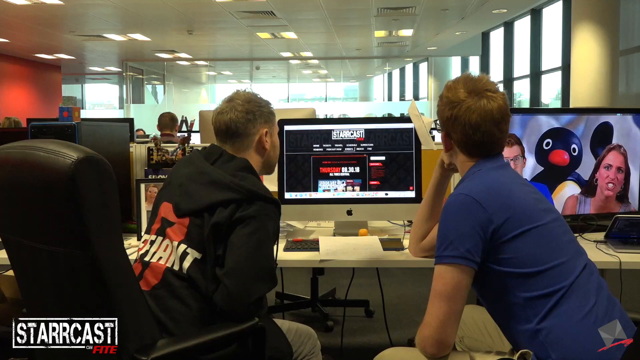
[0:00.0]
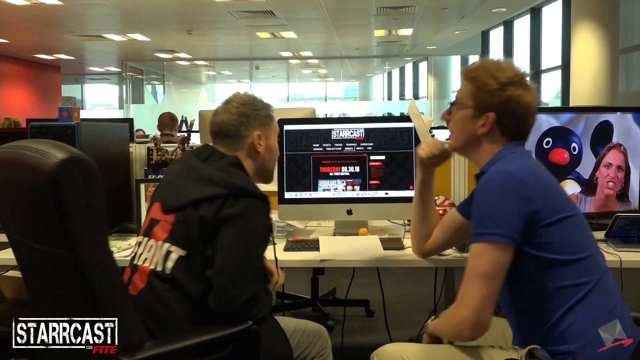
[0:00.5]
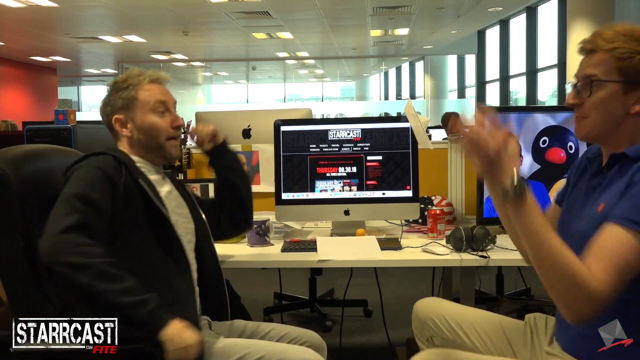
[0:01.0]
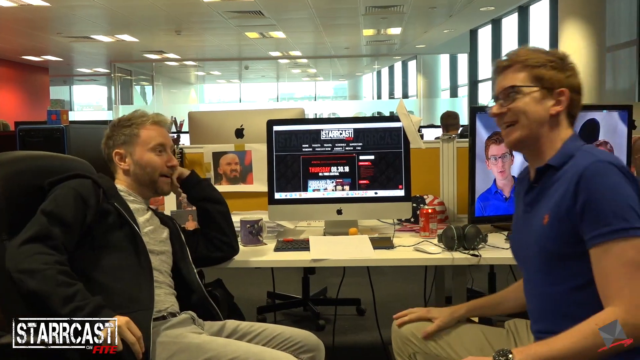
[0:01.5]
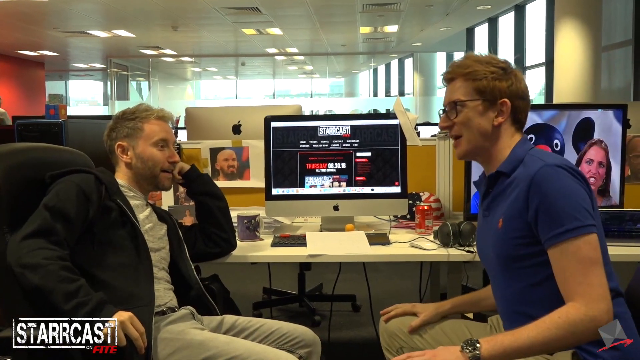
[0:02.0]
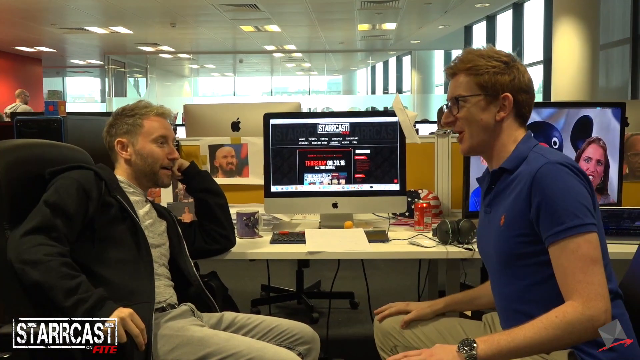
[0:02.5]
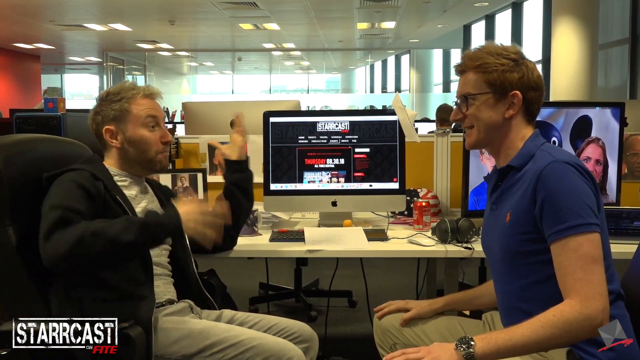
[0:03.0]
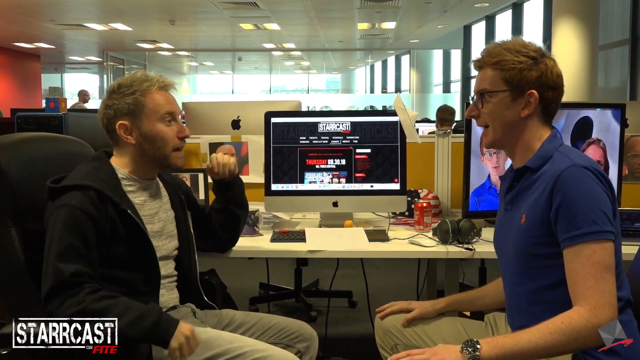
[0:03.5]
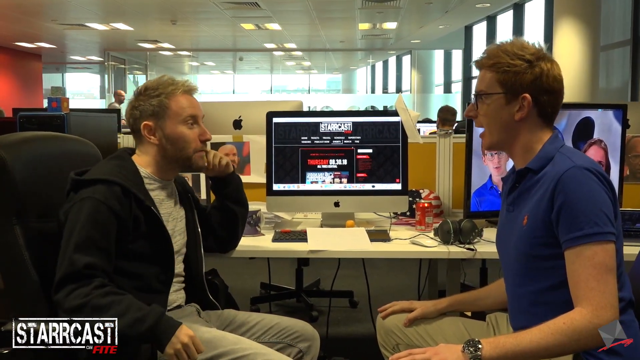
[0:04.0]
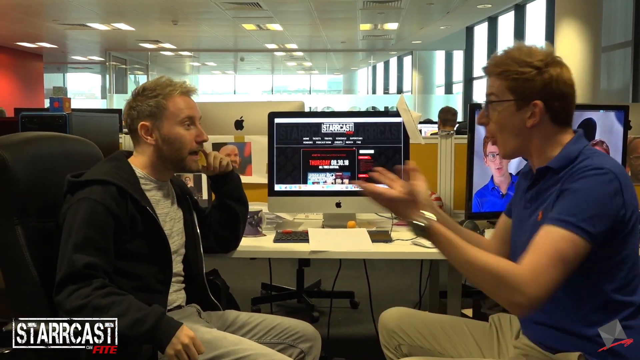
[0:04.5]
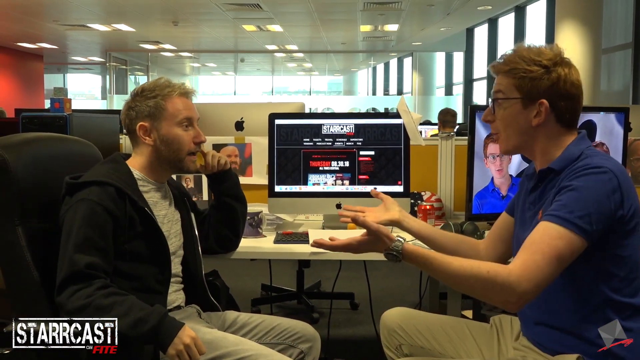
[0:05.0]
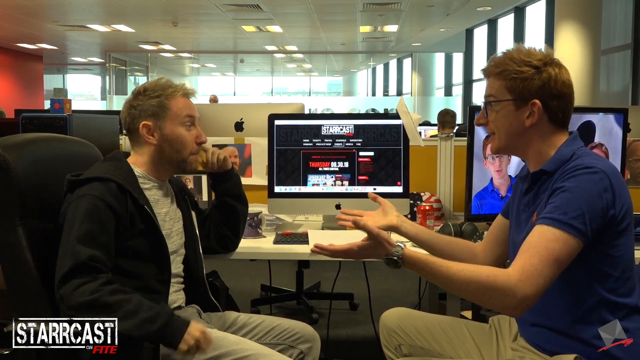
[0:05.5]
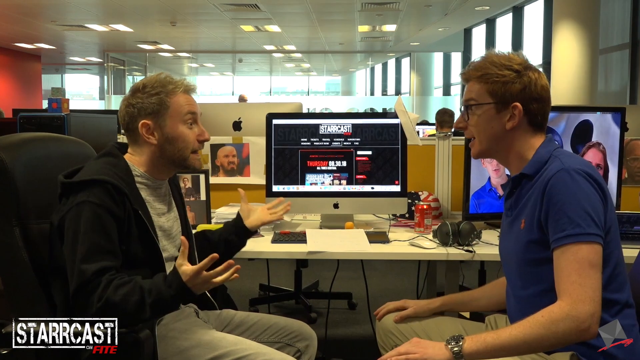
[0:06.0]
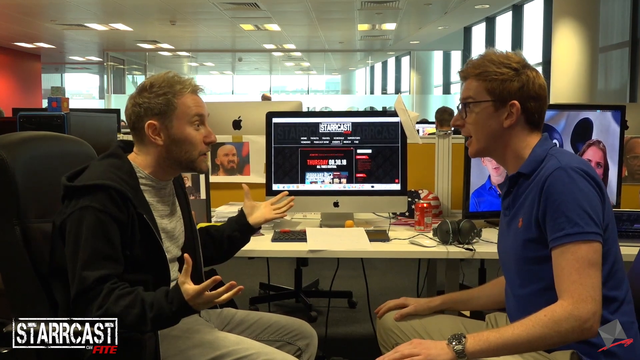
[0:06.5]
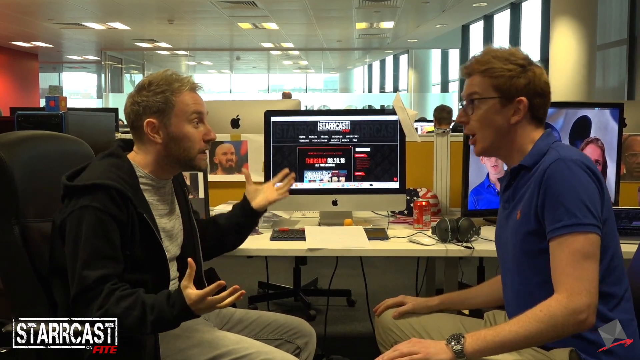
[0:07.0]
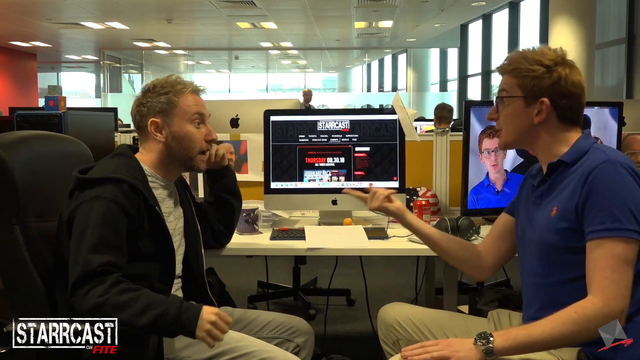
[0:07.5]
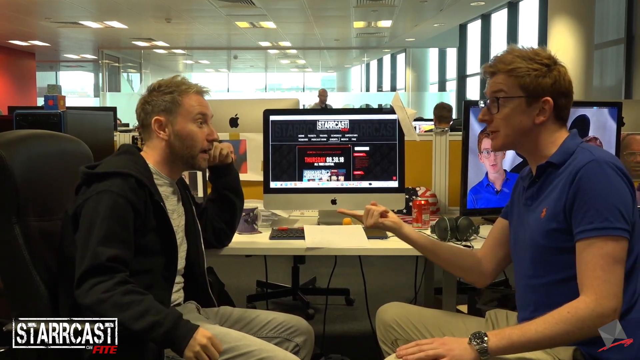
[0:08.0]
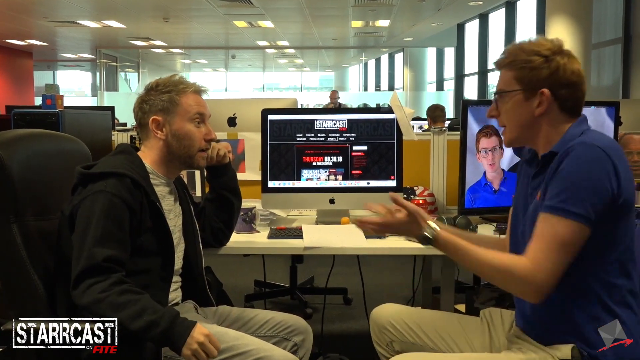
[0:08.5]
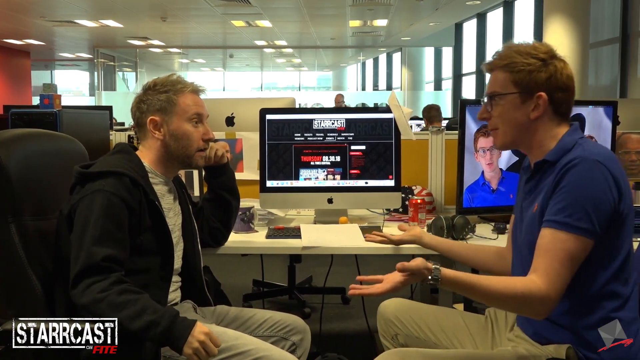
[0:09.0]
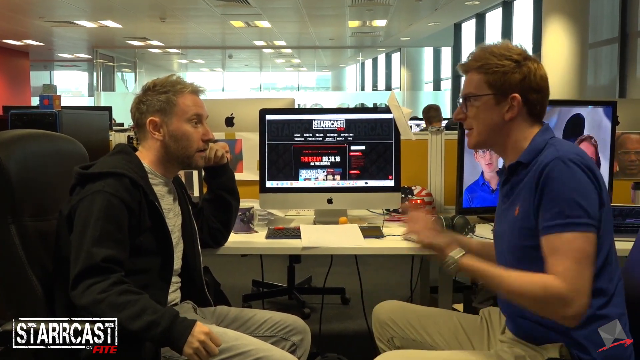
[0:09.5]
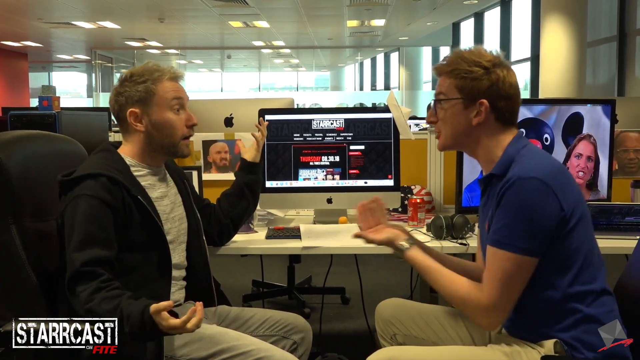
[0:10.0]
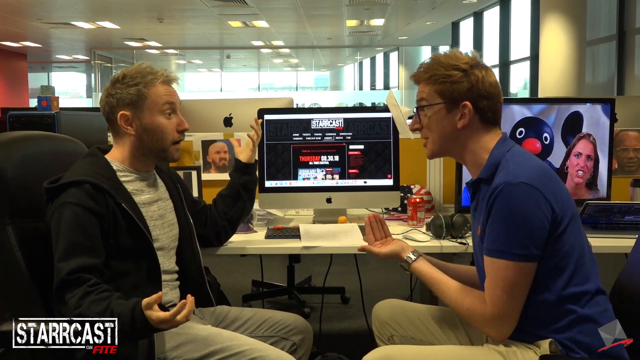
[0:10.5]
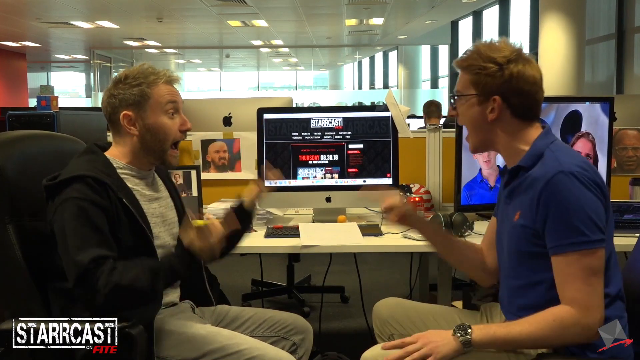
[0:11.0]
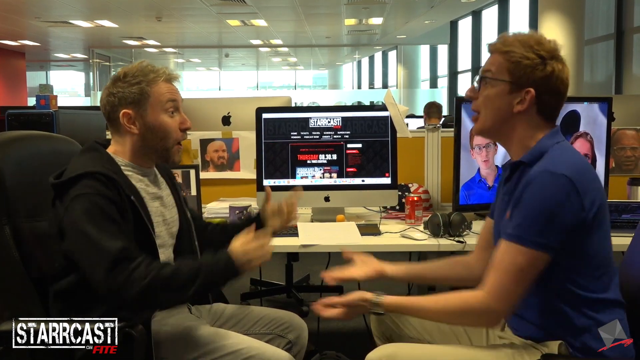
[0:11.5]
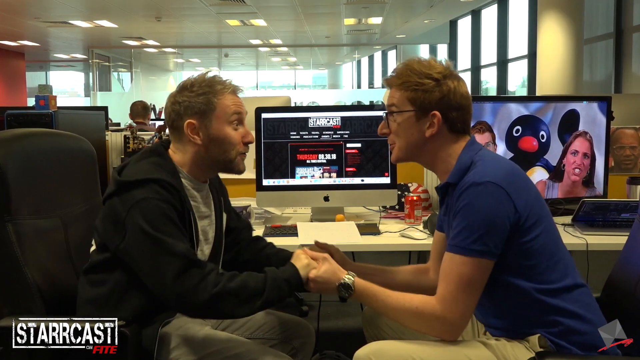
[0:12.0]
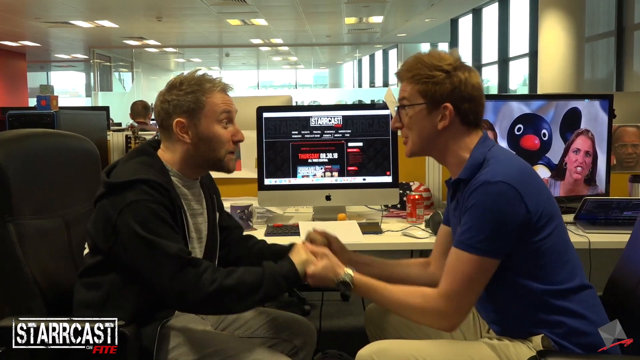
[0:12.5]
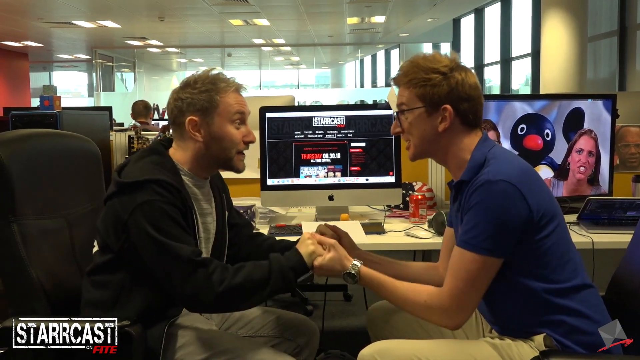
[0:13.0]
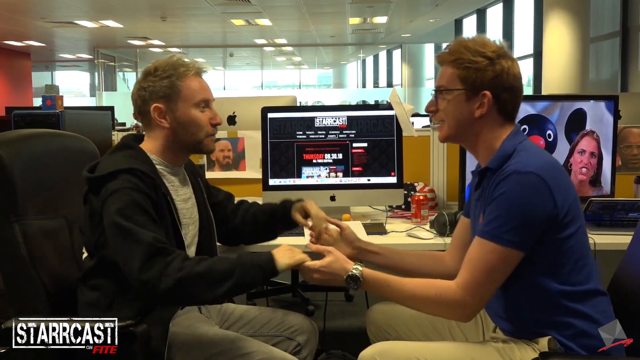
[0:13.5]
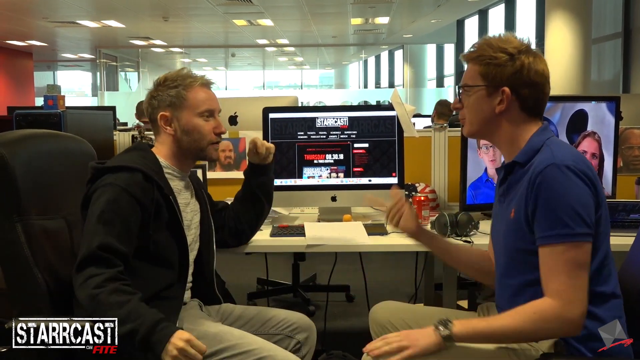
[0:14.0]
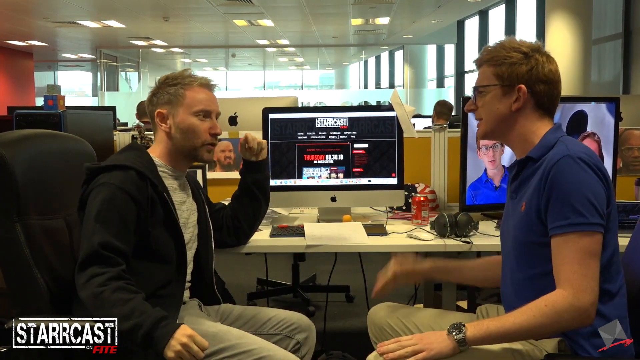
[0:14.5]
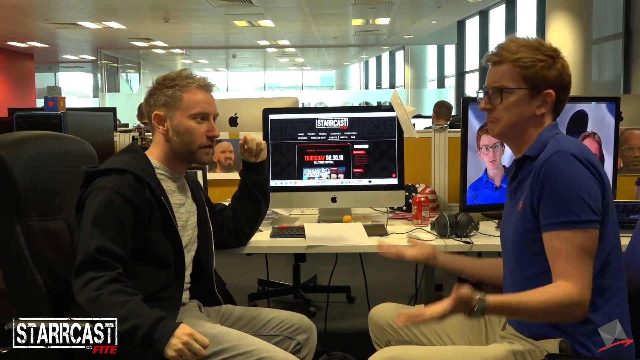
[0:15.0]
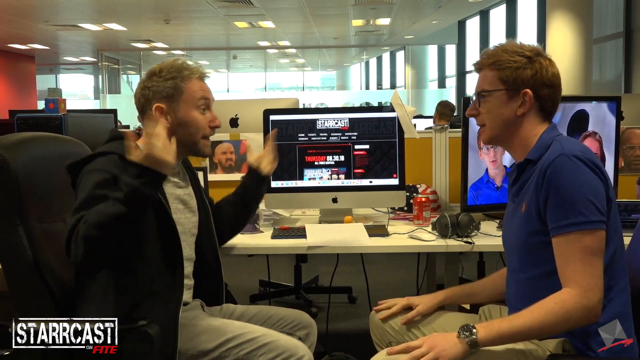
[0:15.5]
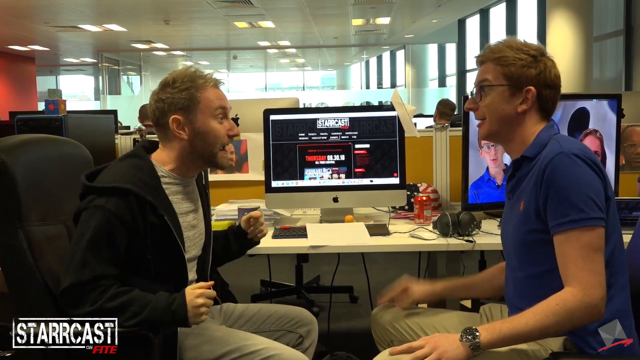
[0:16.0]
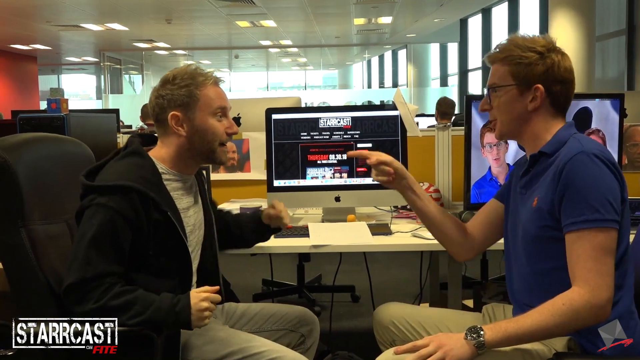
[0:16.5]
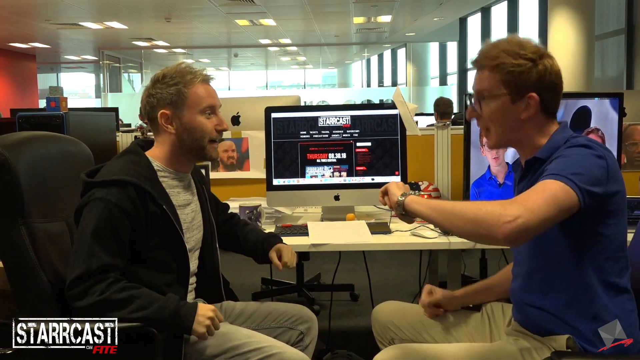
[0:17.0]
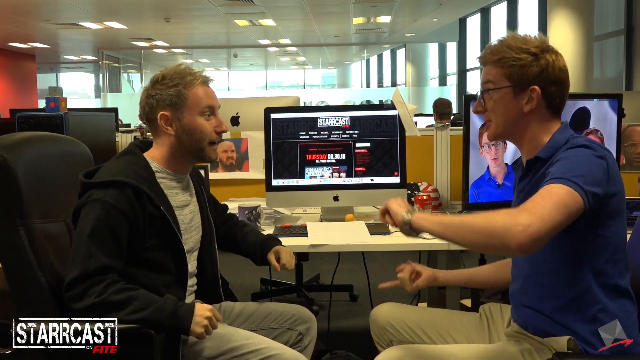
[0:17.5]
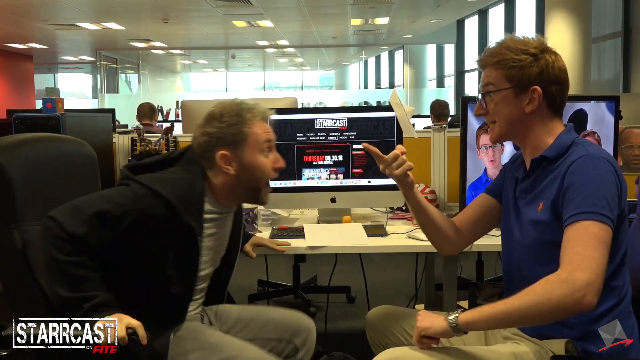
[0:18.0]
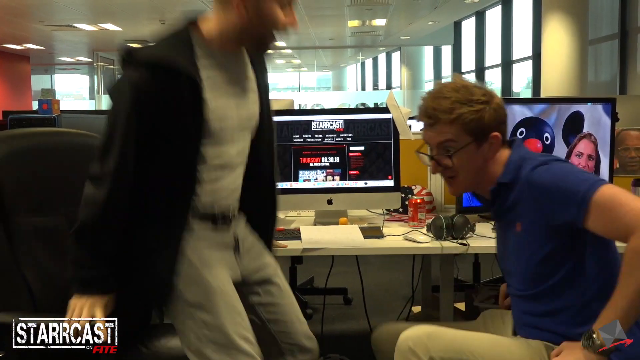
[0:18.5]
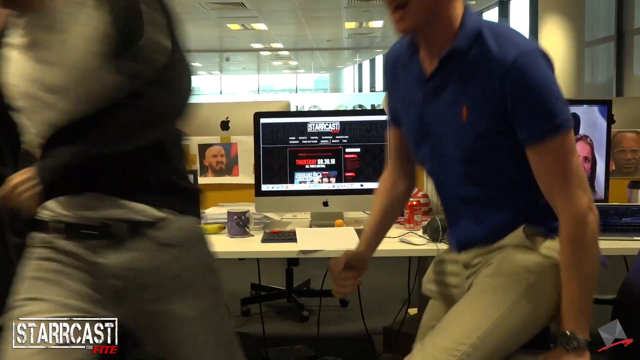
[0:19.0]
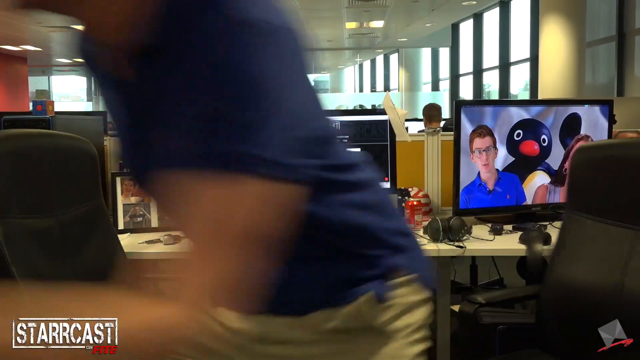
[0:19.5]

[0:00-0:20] Two men stare at a computer, then suddenly see something exciting, back up very fast, sit back and look at each other. One man suddenly sits up and talks, and the man on the left puts his hands toward the other man. They talk over each other with their hands out, then clasp each other's hands in a two-handed shake and keep talking very excitedly. The man on the right says something, the man on the left says something, then the man on the right looks at his watch and the man on the left begins to get up. They are in an office with rows of other people, using Apple computers with the Apple logo visible on the outside. To their right is a screen with a show playing. The office has a lot of windows on the sides. The two men get up and leave the room completely.